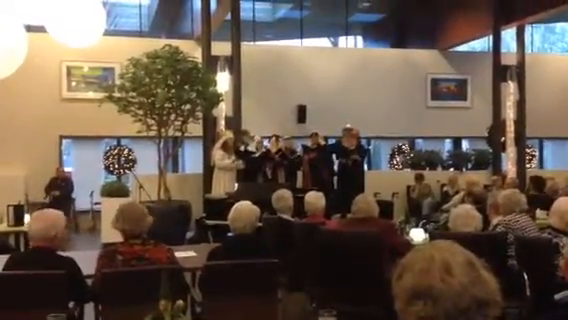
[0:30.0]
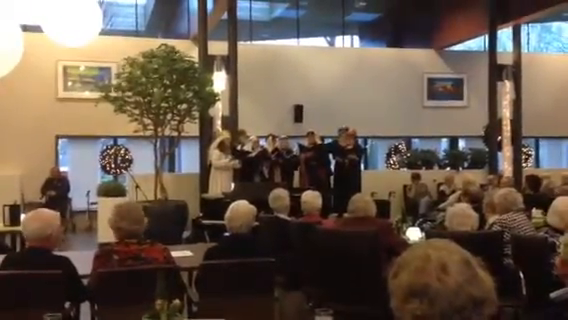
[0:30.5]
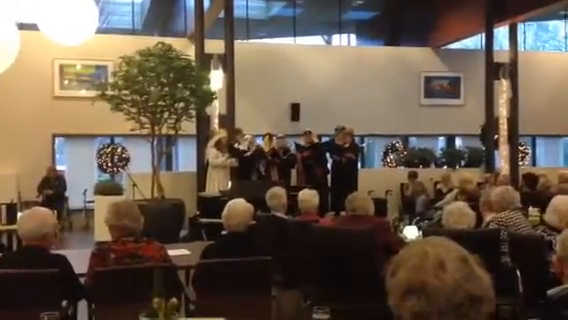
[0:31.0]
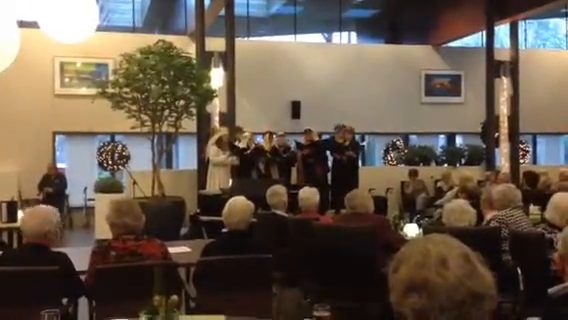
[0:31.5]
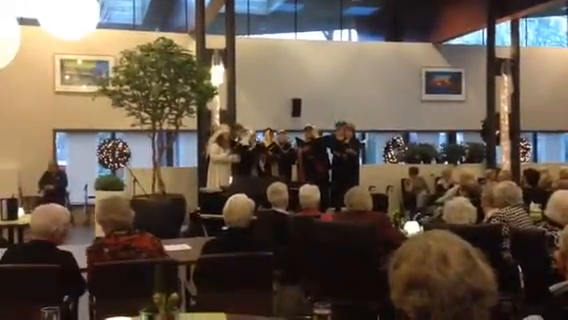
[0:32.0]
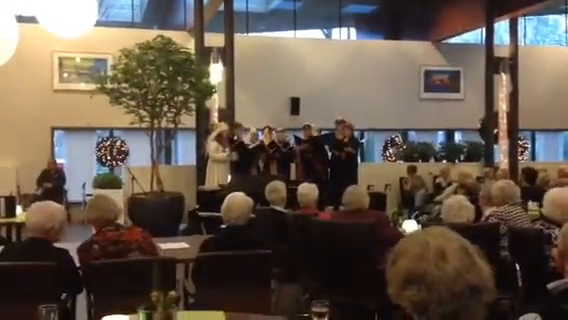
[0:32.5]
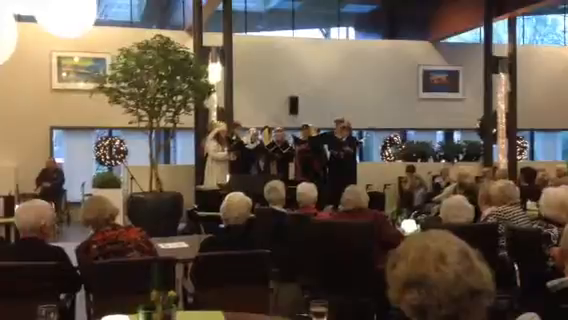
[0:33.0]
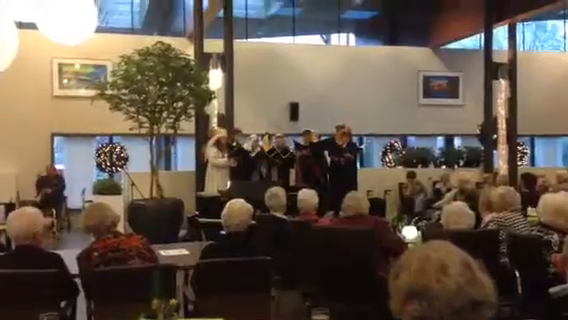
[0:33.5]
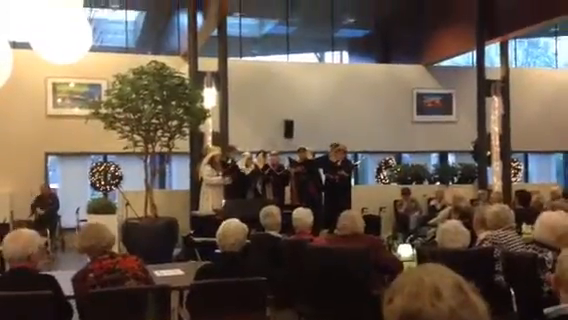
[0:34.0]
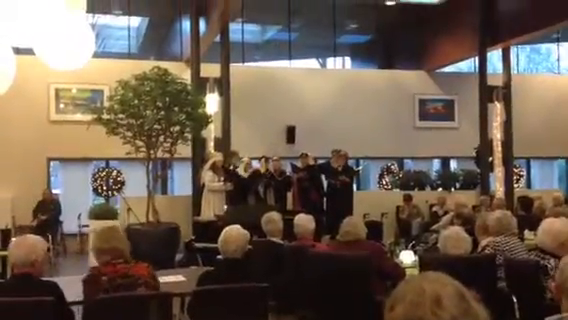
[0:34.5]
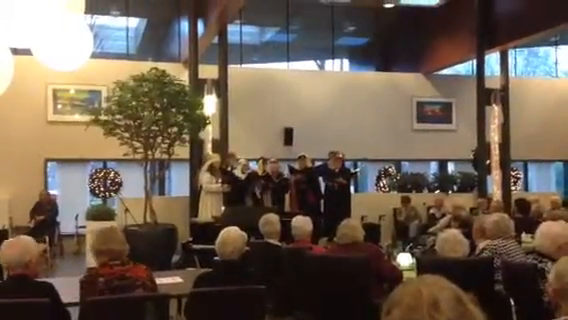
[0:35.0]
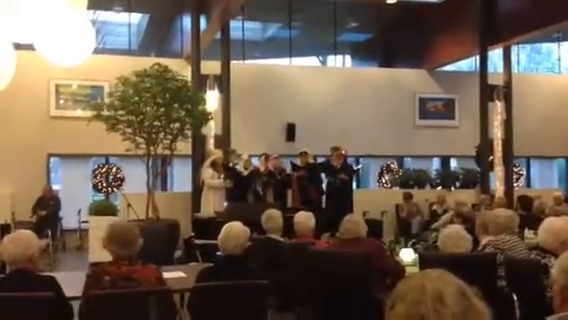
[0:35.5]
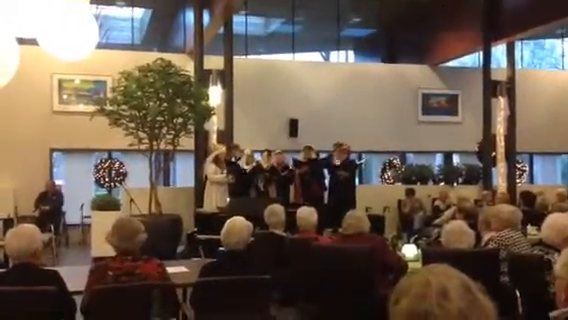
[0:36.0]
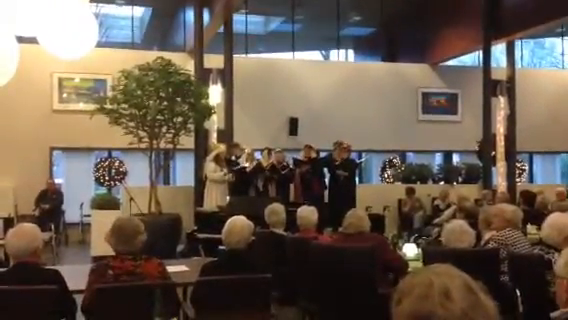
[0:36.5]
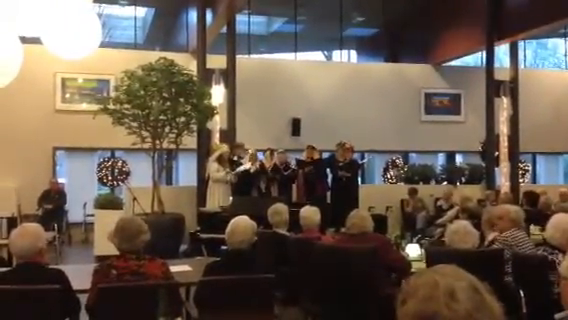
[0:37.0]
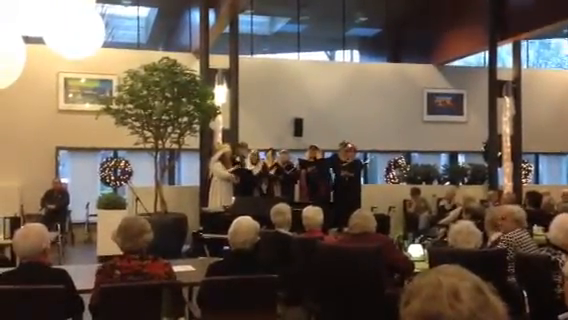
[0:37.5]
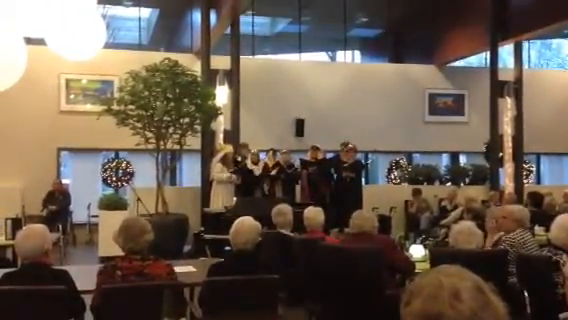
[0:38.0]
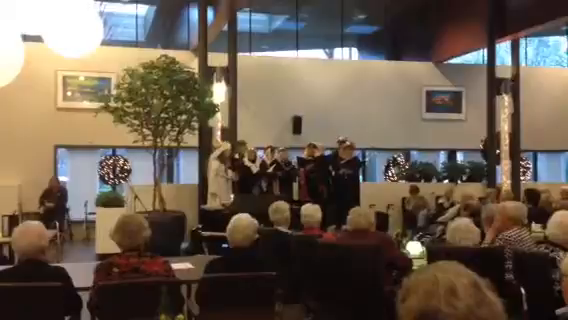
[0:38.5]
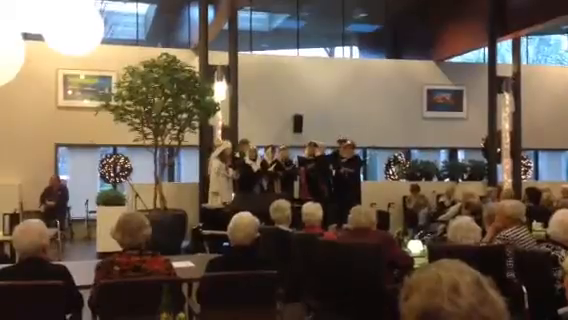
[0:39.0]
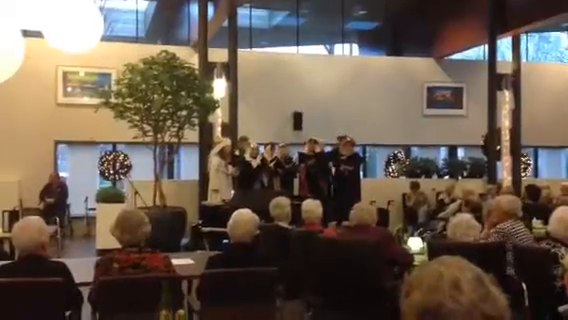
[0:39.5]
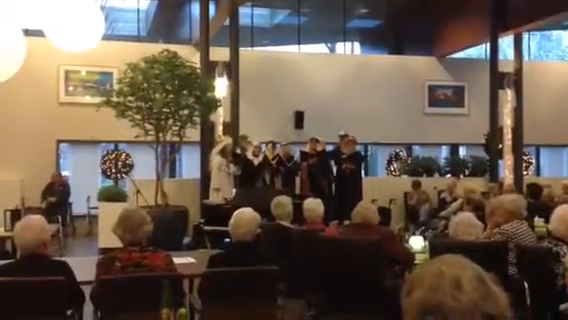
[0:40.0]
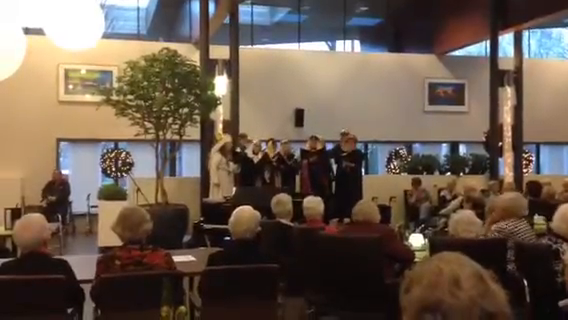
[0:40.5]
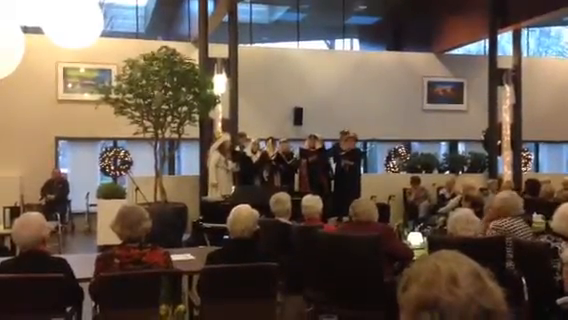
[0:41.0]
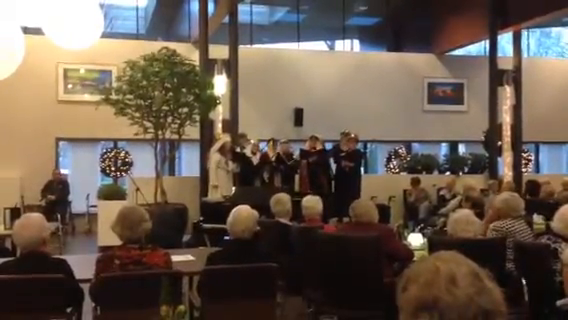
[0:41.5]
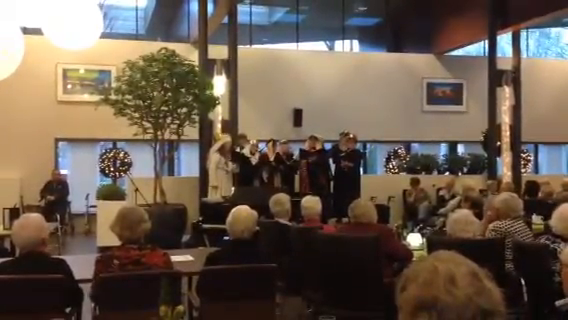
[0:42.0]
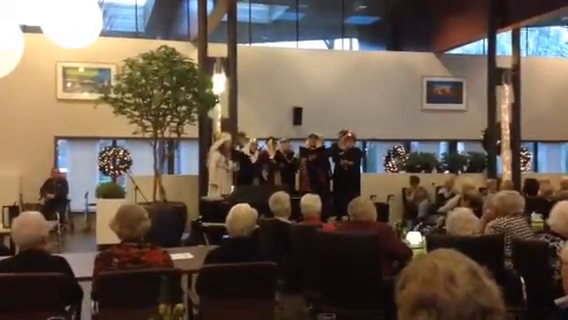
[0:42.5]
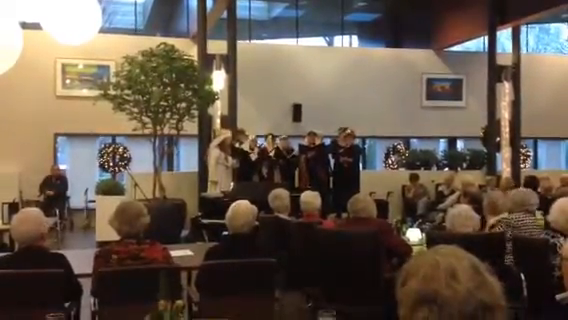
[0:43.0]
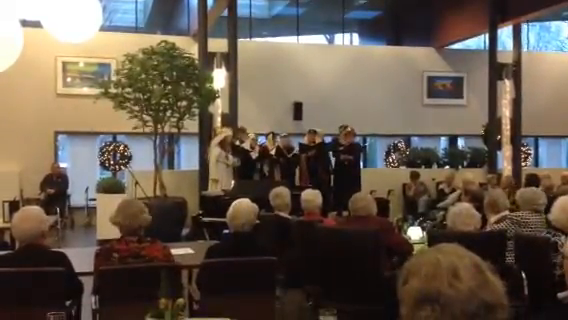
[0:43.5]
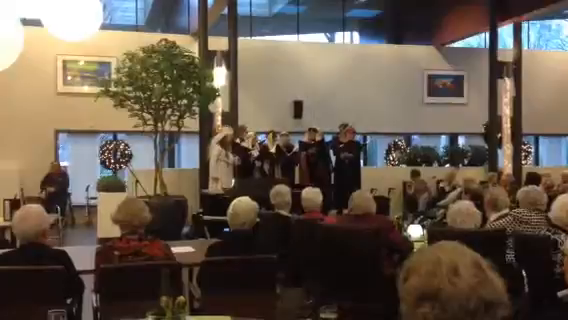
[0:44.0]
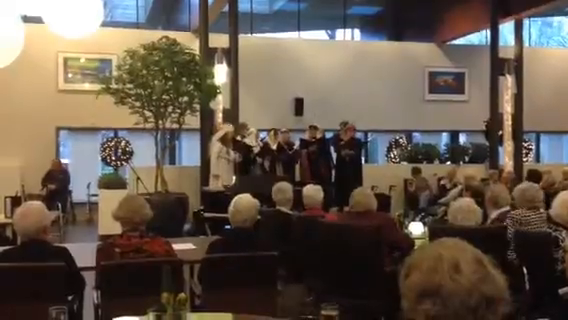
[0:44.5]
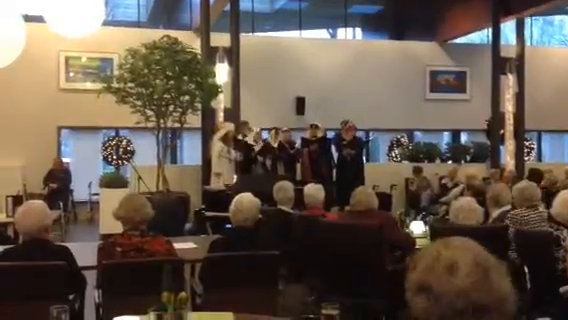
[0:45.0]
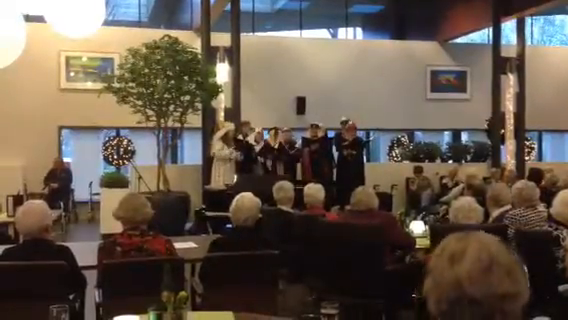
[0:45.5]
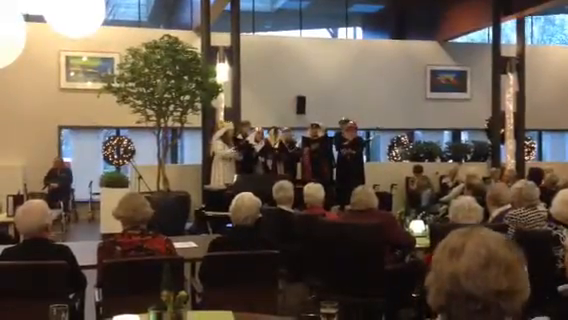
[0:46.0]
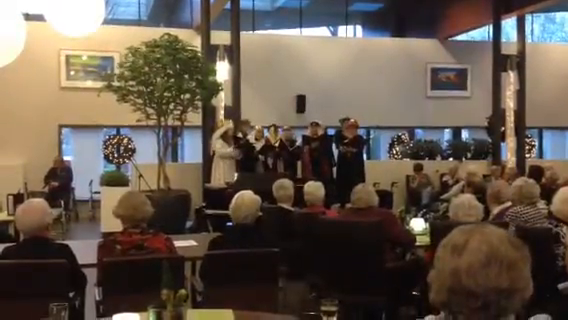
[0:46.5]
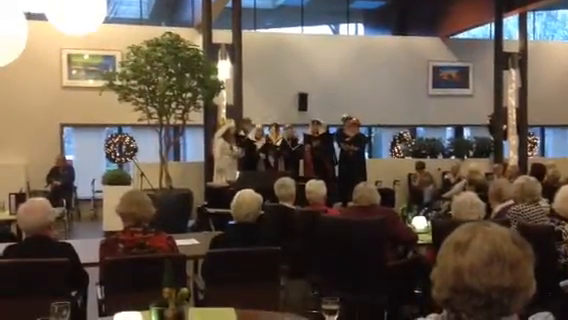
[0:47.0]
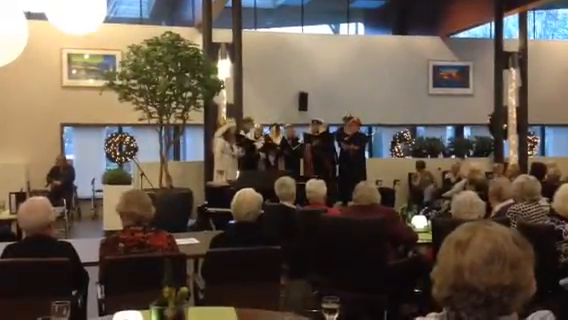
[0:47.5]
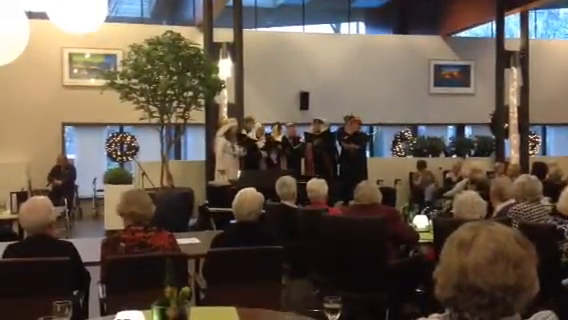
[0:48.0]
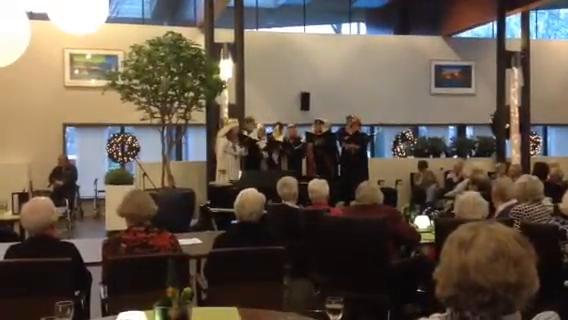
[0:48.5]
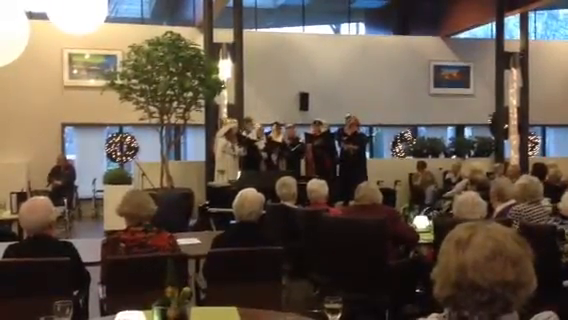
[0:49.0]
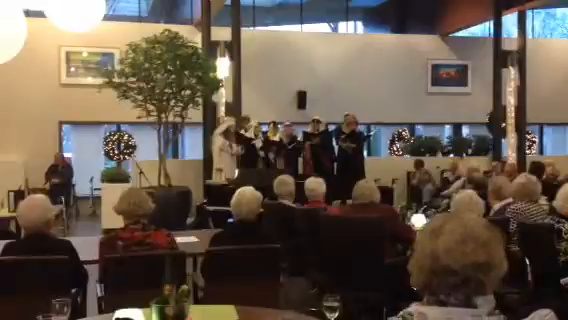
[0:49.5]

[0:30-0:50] The performance on the indoor stage continues. Off to one side, to the right of the performers and behind them, a man is seated; his role in the performance is unclear, and he is watching the crowd as well as the performers. Daylight shines in through the windows, so it is a daytime performance. A row of seating is directly behind the performers, and the people there are also watching the performance very closely. Round white illuminated lamps are overhead to one side, and directly behind the performance area, elevated on the wall, is a dark rectangle that could be a speaker of some sort. The flat vertical pillars on either side of the stage are reminiscent of the Golden Gate Bridge because of their shape and the gaps between the pillars and the walls.